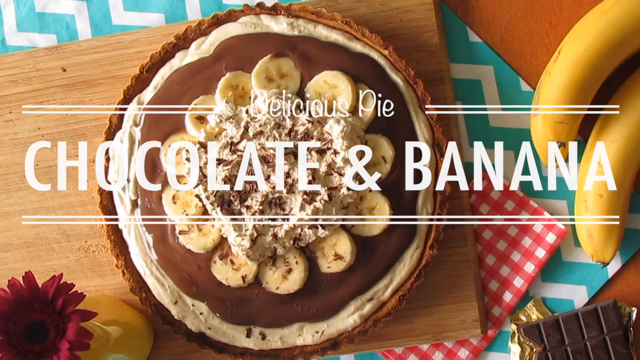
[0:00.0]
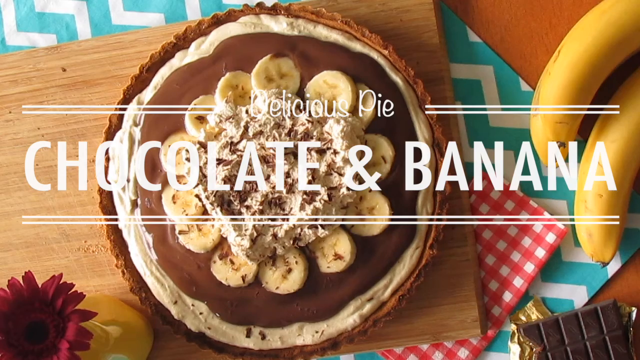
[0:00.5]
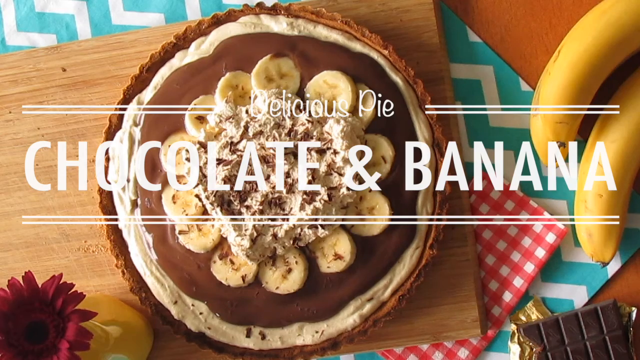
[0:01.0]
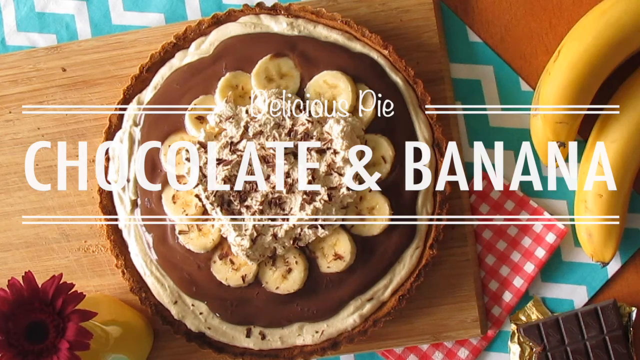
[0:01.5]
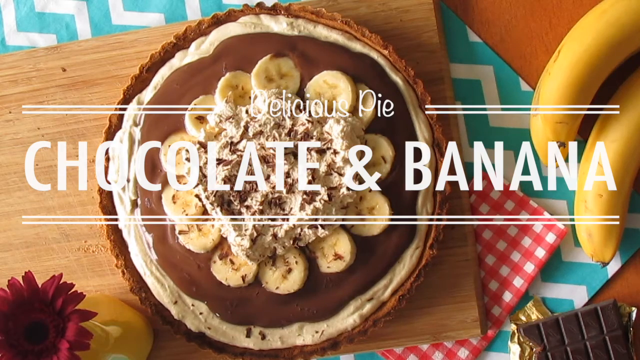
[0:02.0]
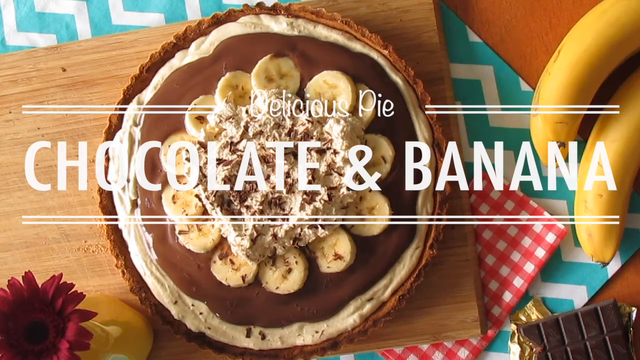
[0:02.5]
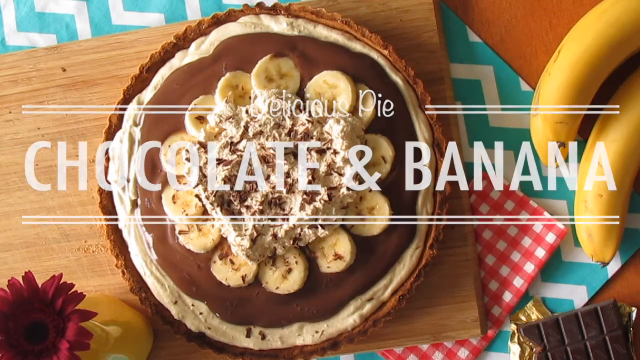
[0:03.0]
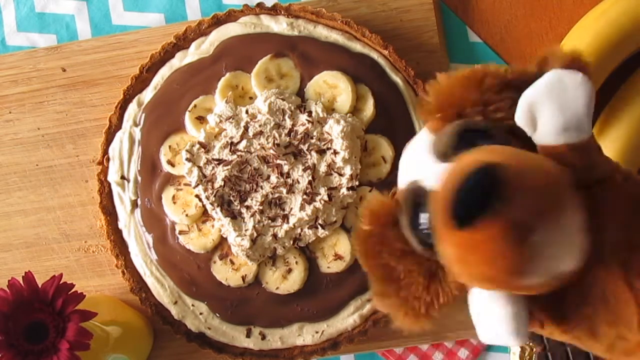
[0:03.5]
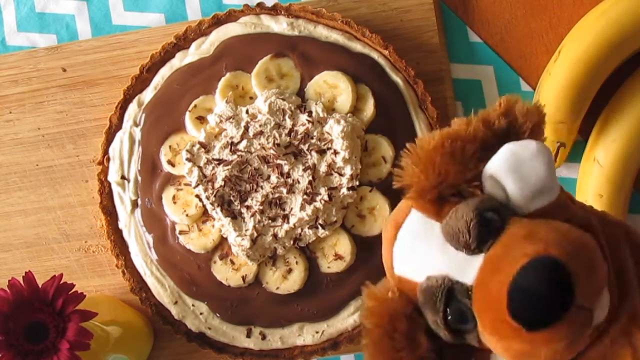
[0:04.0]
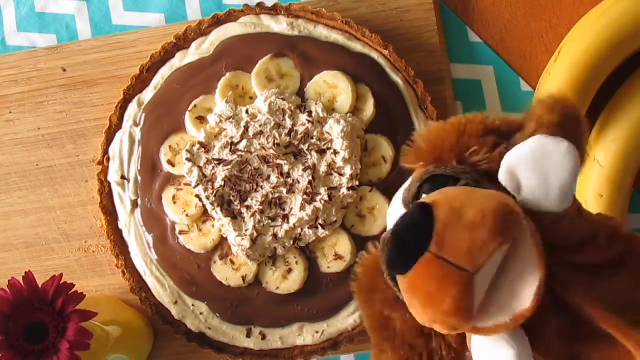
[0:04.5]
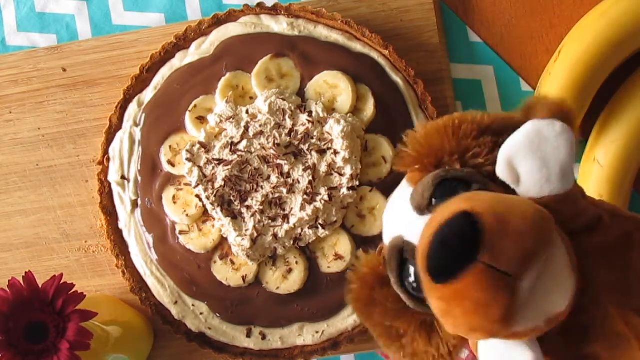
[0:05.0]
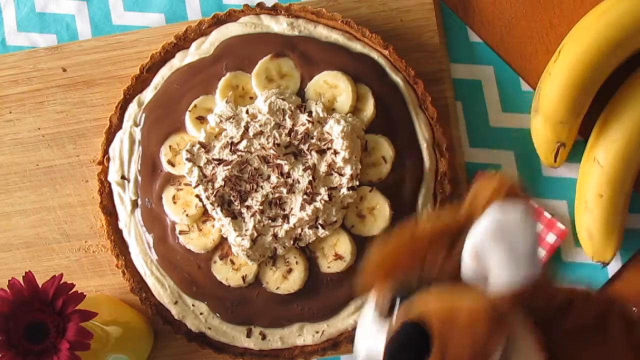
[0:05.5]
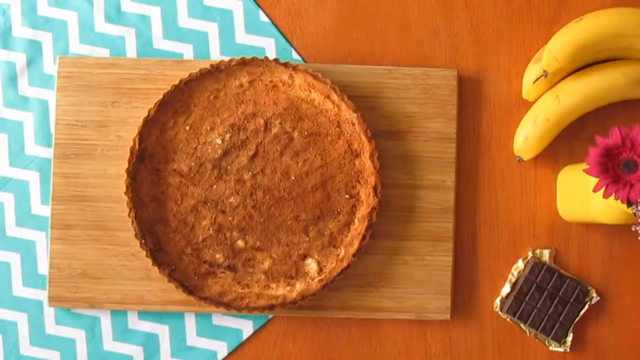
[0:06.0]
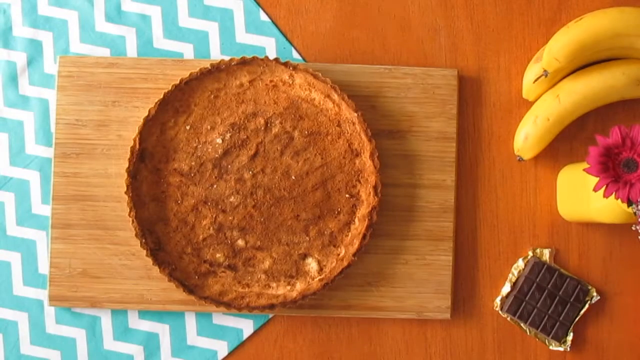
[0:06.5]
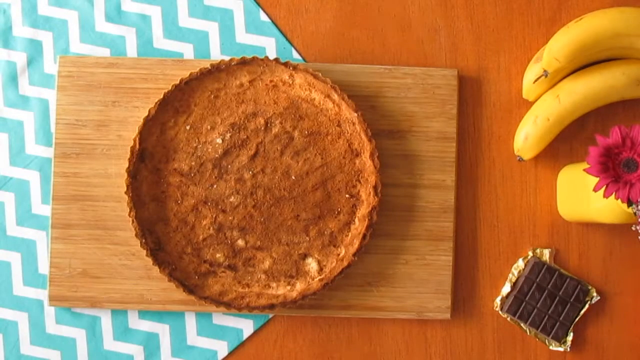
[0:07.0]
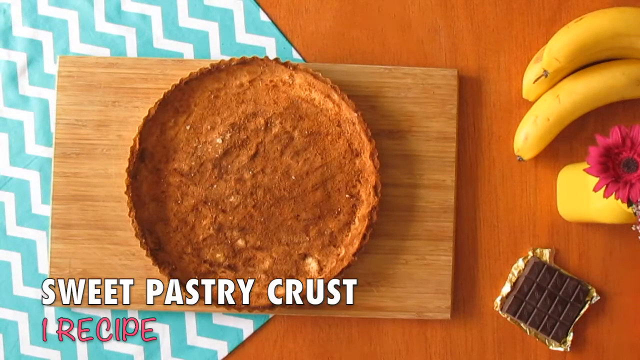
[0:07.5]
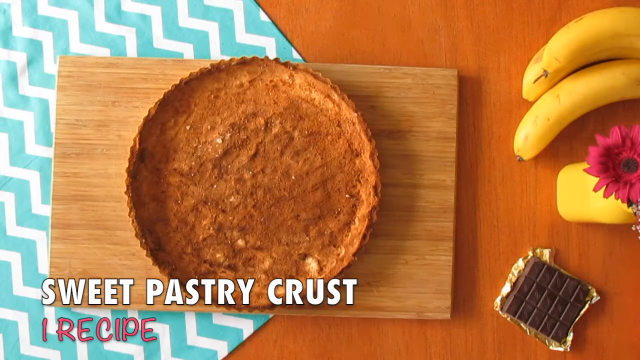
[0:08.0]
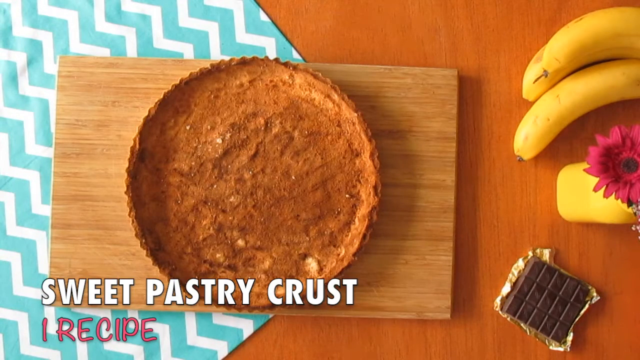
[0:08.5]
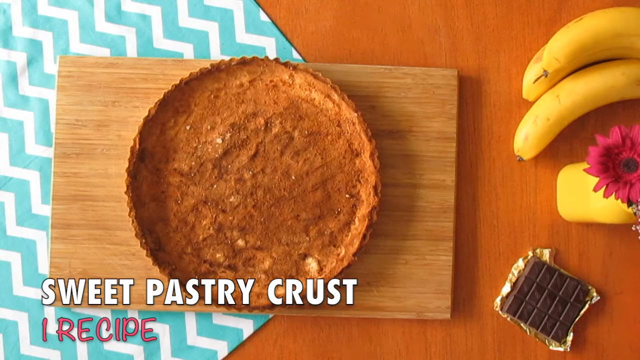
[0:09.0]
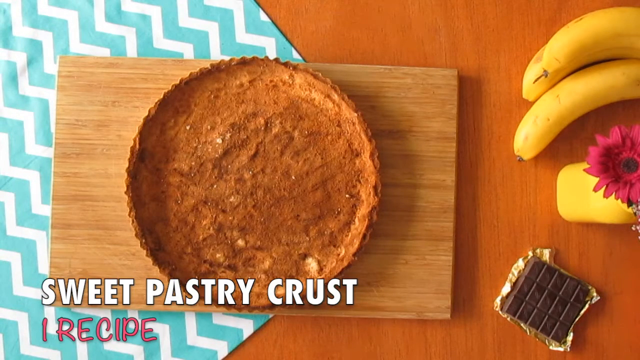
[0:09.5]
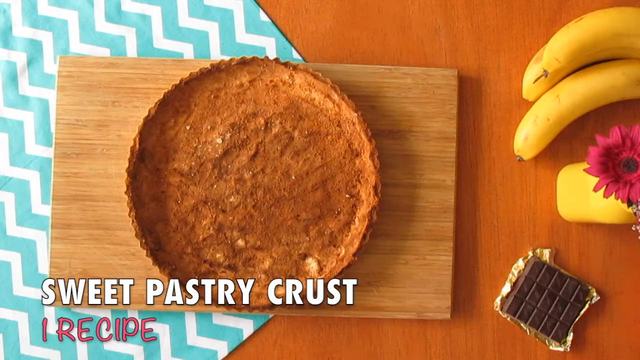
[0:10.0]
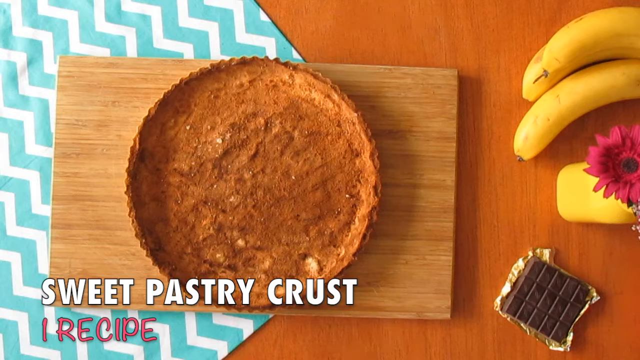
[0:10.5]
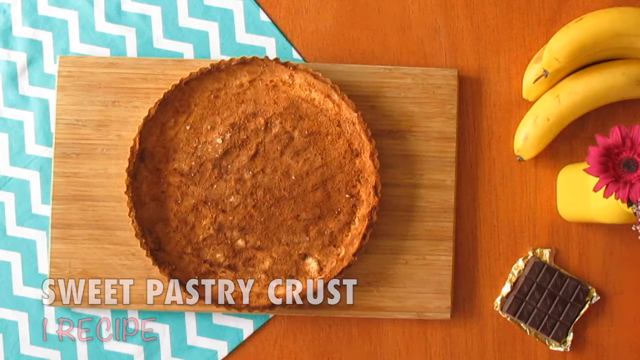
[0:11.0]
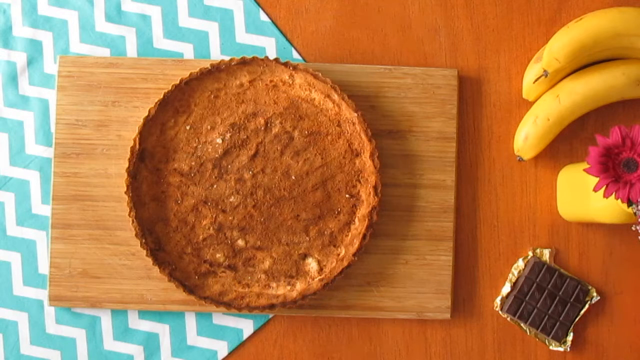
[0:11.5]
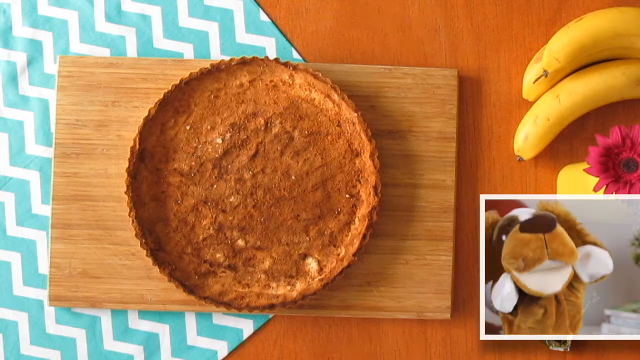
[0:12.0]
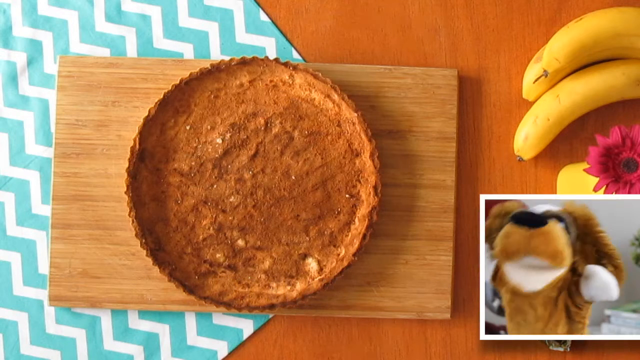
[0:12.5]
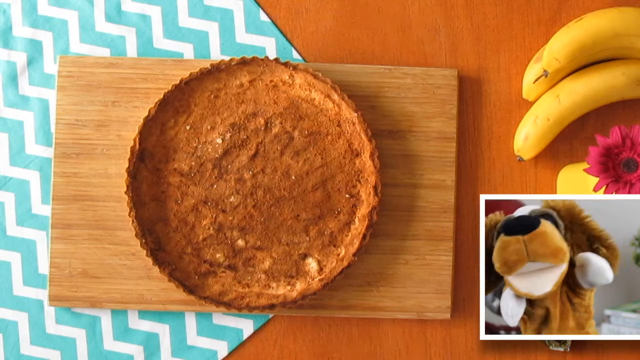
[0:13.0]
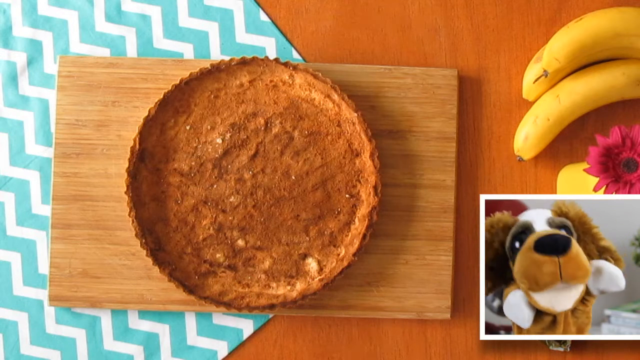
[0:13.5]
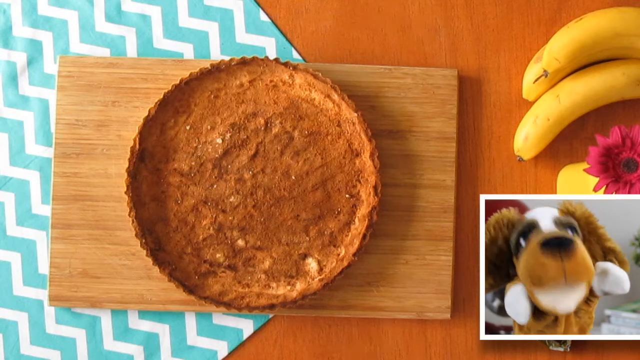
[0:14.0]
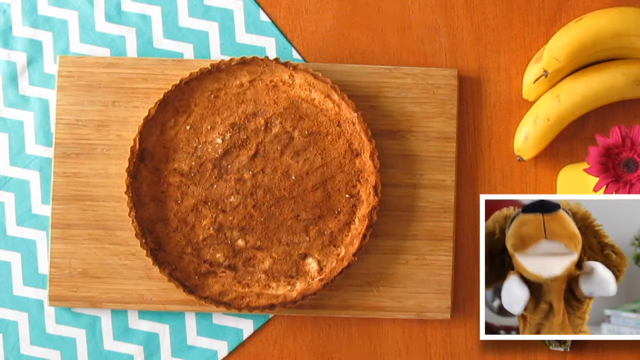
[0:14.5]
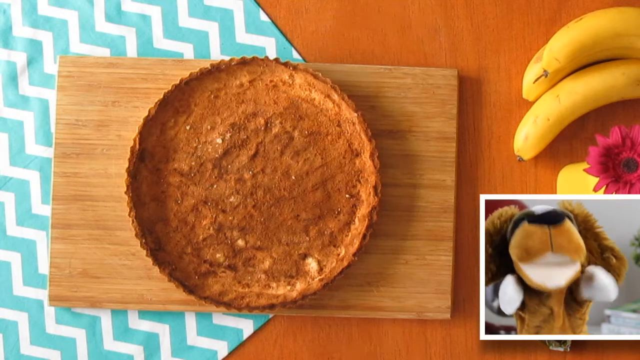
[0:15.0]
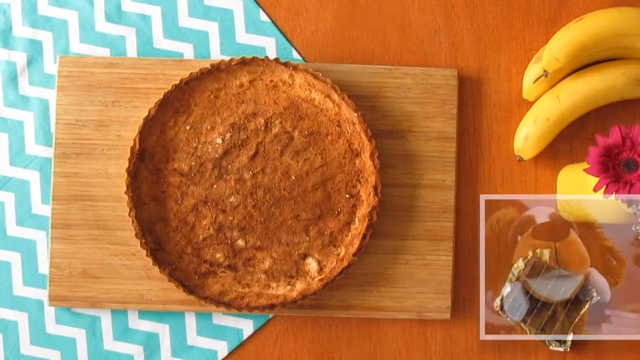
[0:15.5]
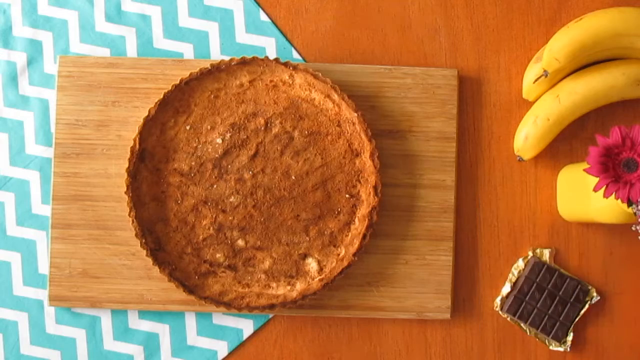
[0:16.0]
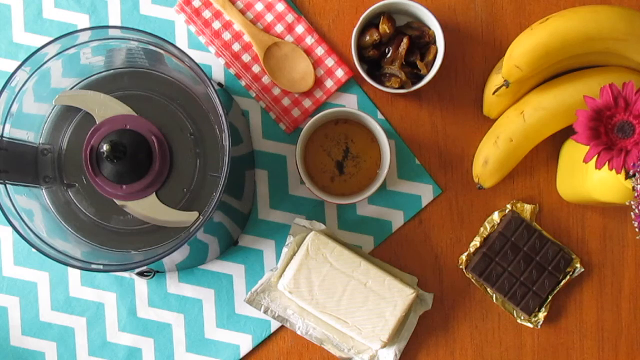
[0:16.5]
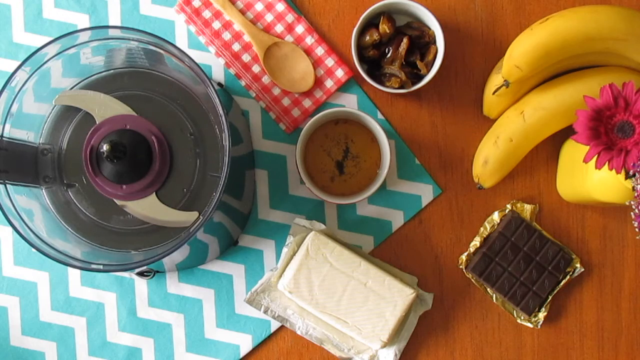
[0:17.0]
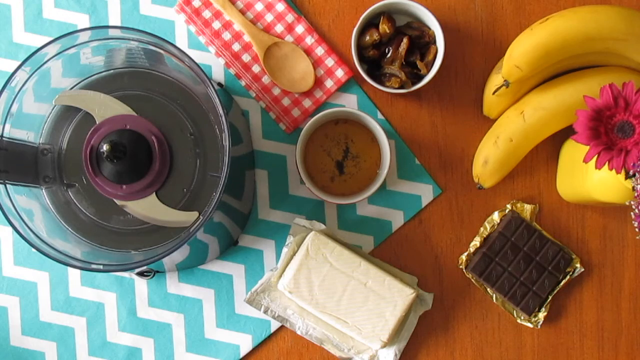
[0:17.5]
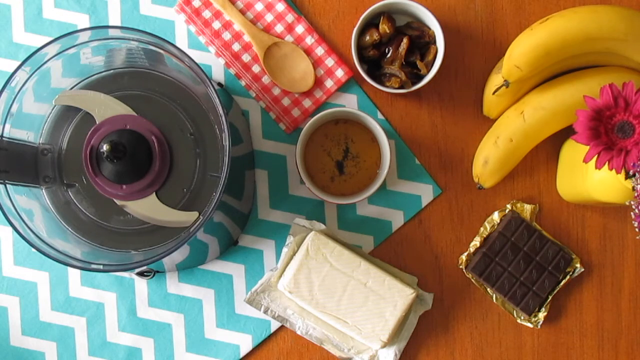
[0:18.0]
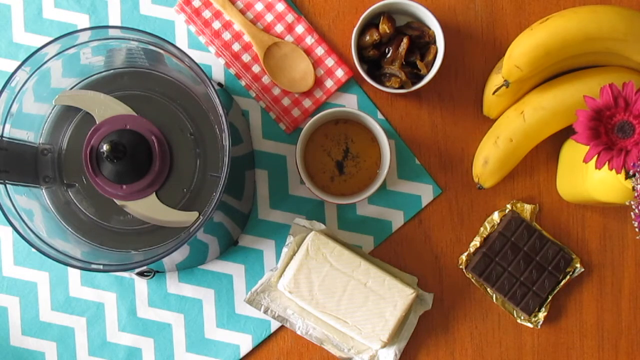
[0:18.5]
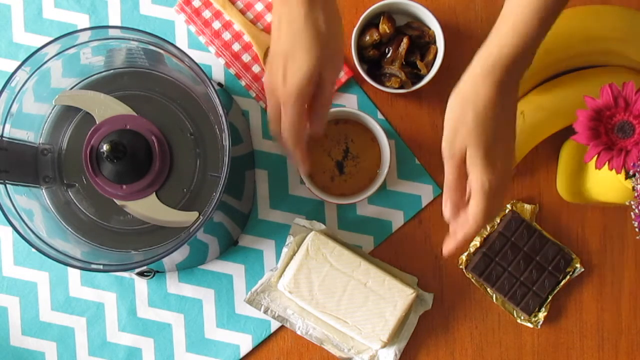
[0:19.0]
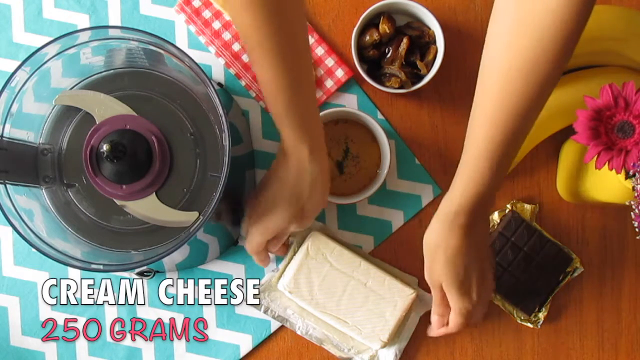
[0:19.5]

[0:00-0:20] A table holds a chocolate and banana pie, with a bright coloured tablecloth and some bananas in the shot. White on-screen text reads "delicious pie chocolate and banana". What seems to be a dog puppet comes on screen. The video cuts to a wooden table with a blue and white chevron-style tablecloth, with some bananas, some chocolate and a flower in the background. On a wooden chopping board on the table is the base of the pie, and text reads "sweet pastry crust". It then cuts to the table with what looks like a mixer or chopper of some sort and more ingredients, including what looks like lard or butter but is actually cream cheese, as the on-screen text "cream cheese" indicates. There is some sugar and maybe dates in various sized pots on the table.